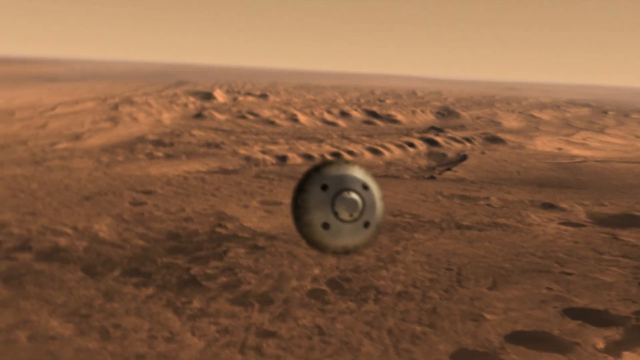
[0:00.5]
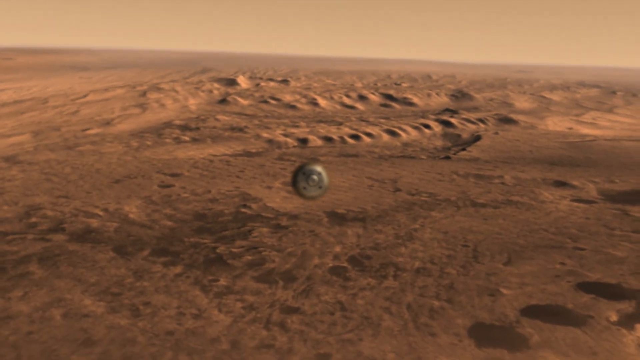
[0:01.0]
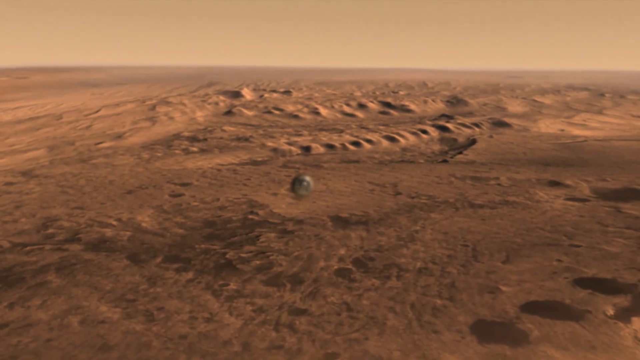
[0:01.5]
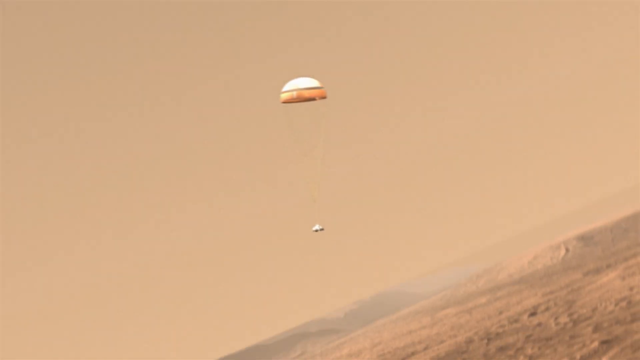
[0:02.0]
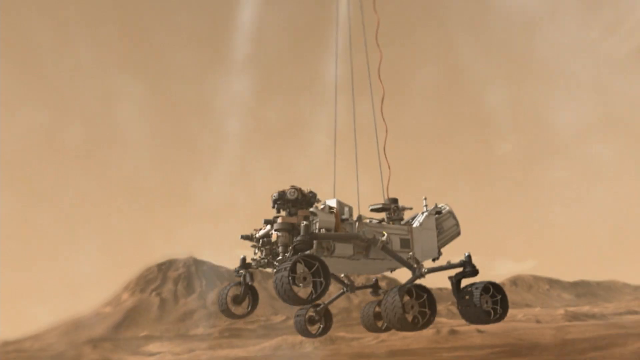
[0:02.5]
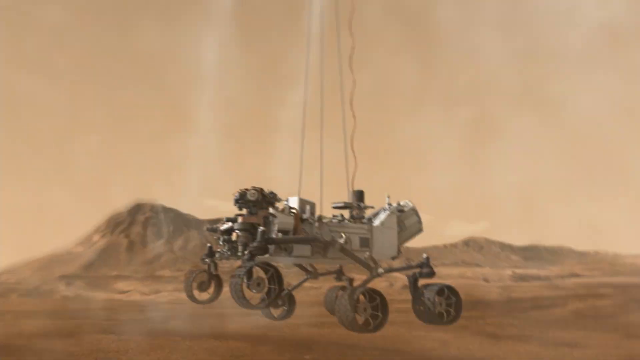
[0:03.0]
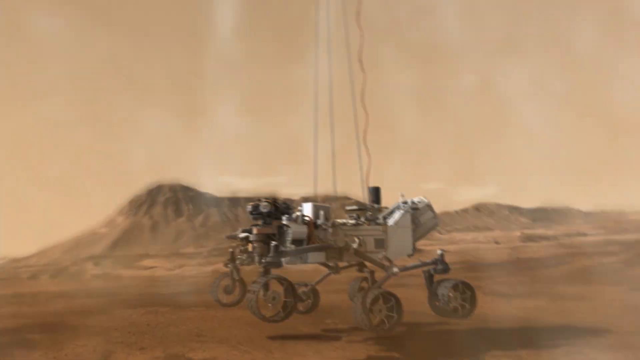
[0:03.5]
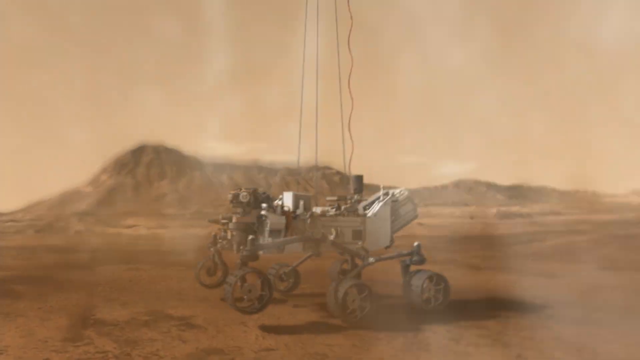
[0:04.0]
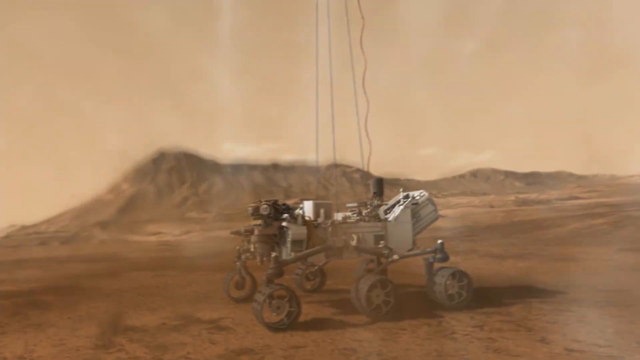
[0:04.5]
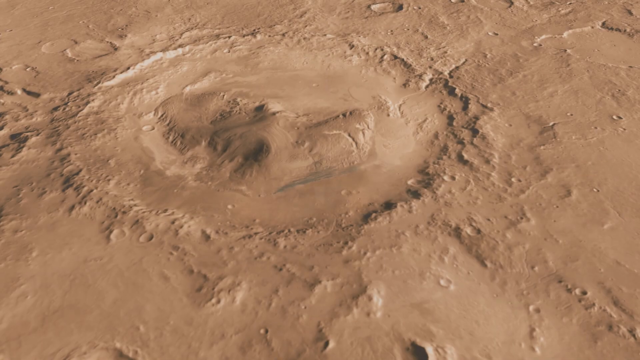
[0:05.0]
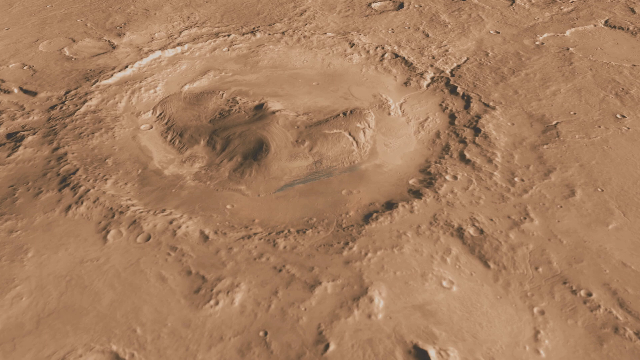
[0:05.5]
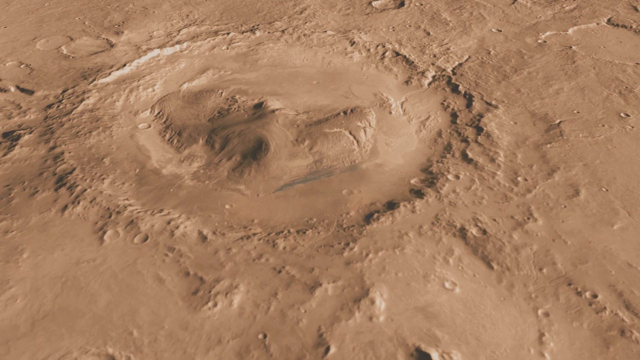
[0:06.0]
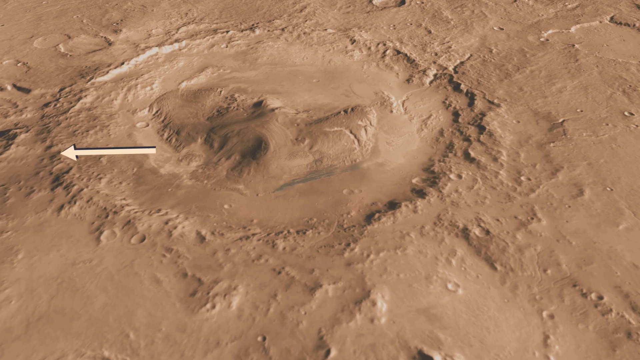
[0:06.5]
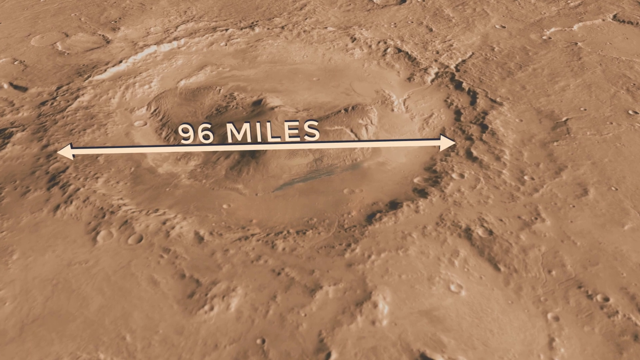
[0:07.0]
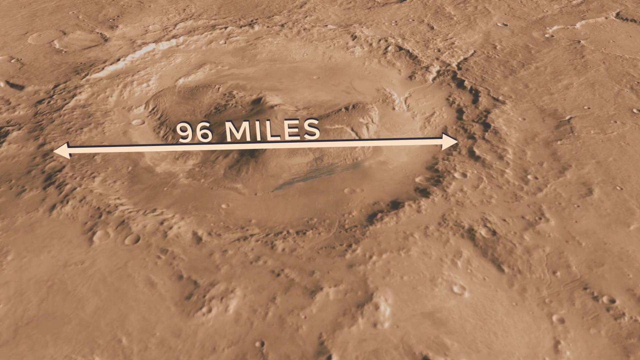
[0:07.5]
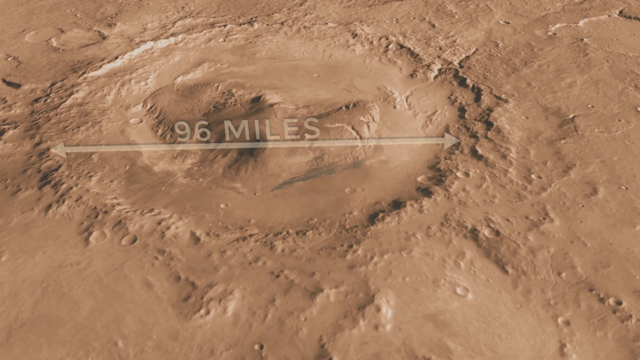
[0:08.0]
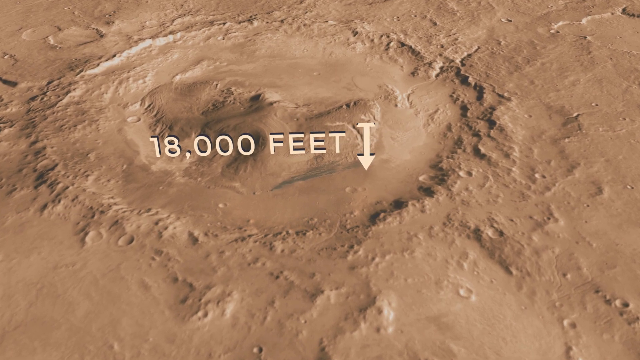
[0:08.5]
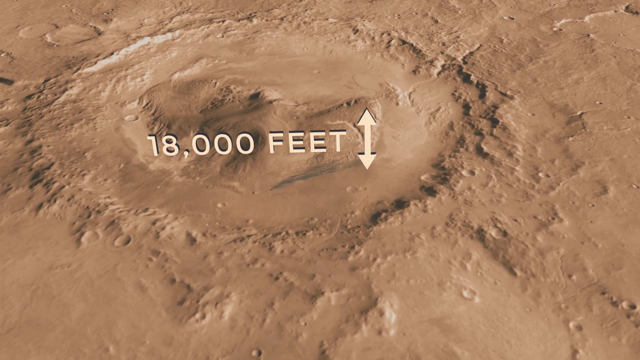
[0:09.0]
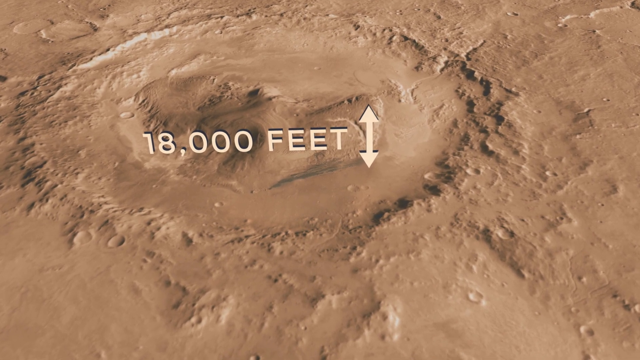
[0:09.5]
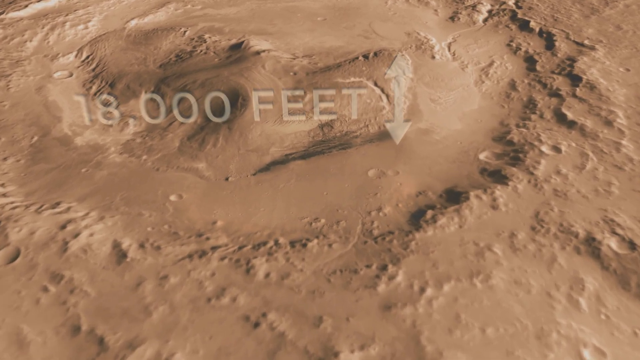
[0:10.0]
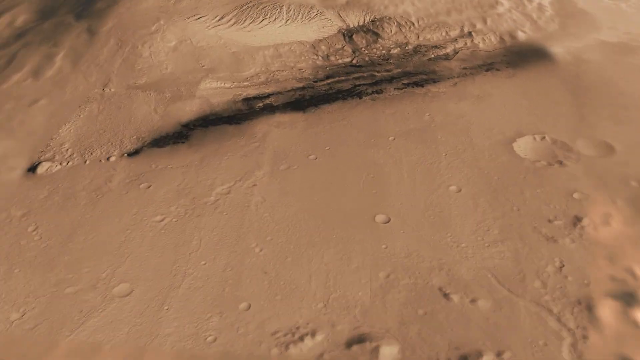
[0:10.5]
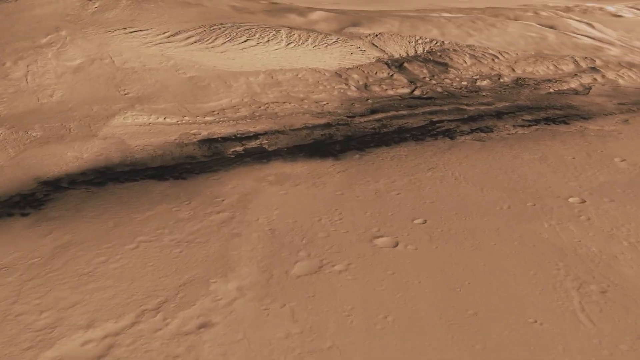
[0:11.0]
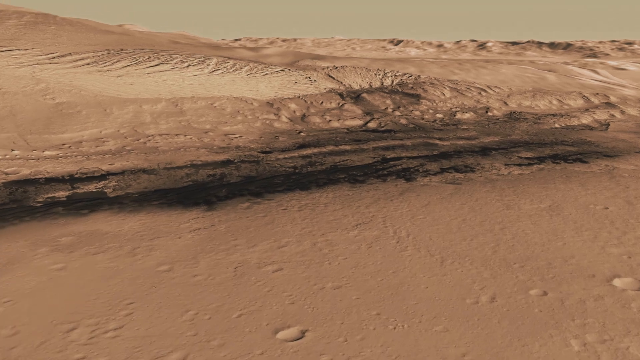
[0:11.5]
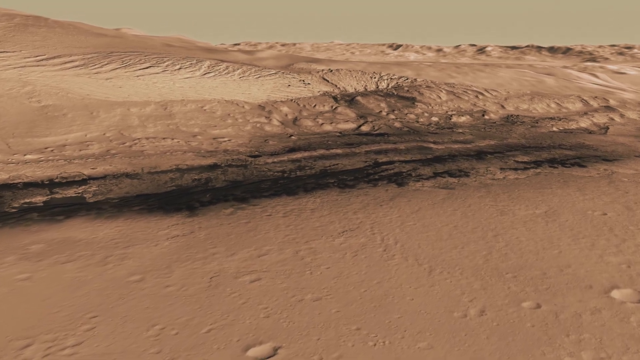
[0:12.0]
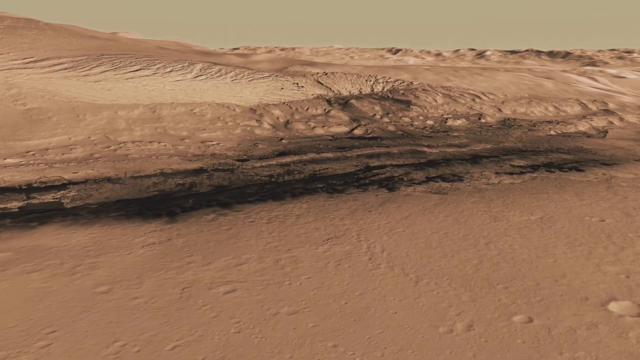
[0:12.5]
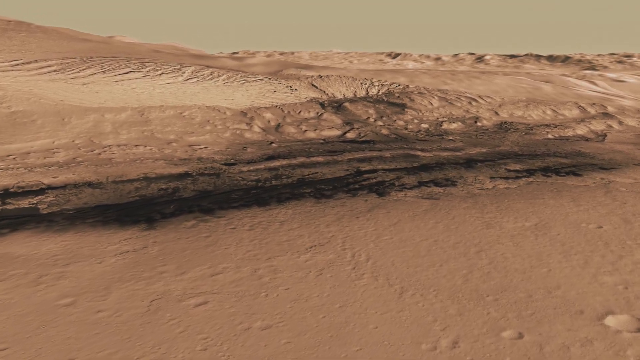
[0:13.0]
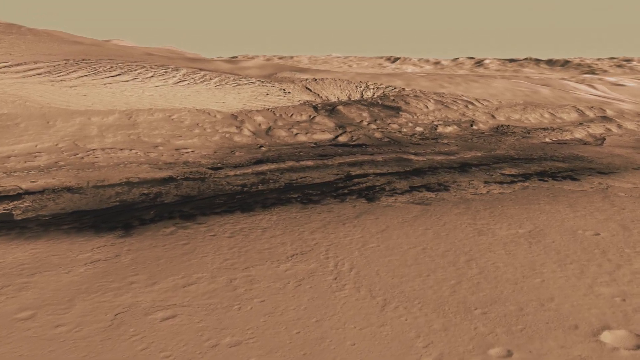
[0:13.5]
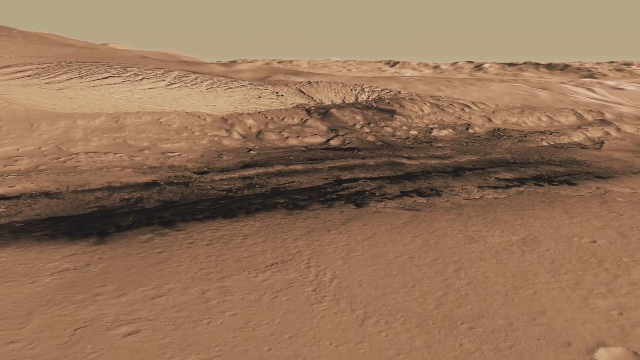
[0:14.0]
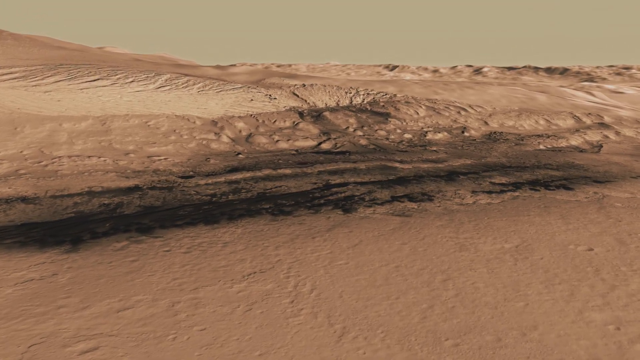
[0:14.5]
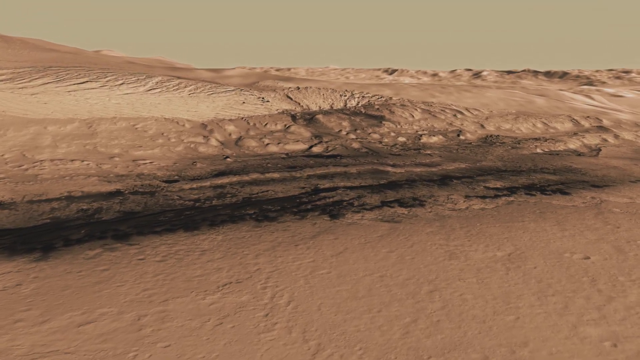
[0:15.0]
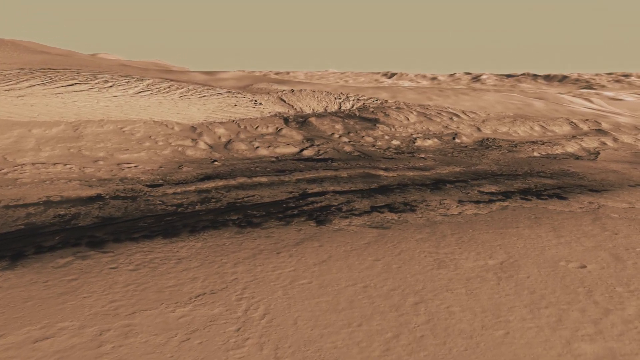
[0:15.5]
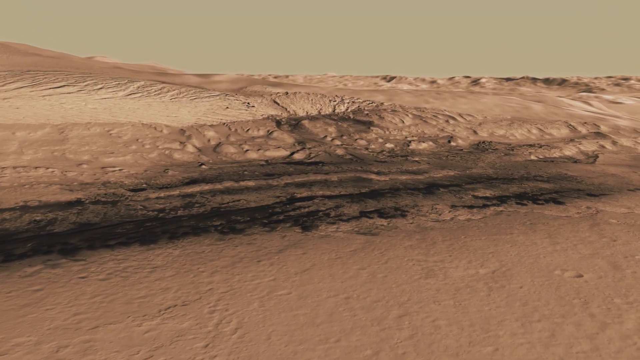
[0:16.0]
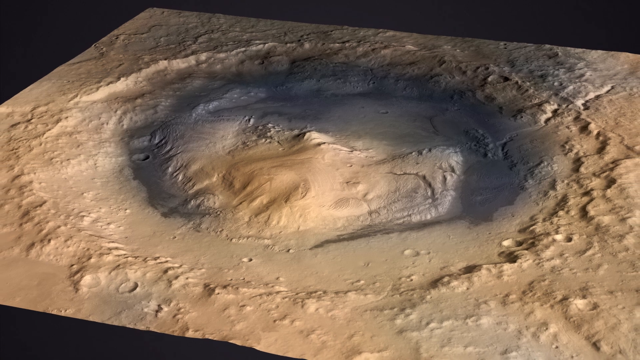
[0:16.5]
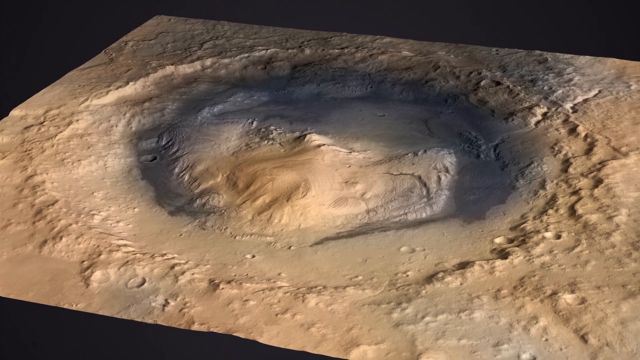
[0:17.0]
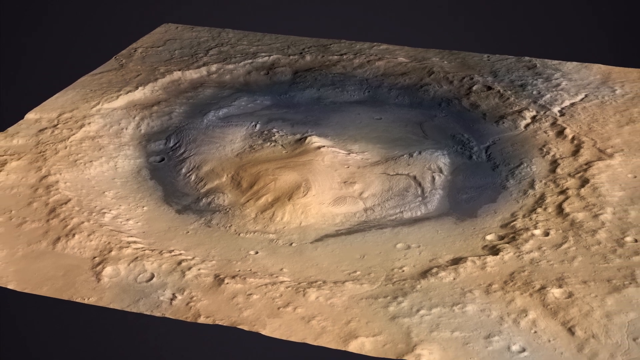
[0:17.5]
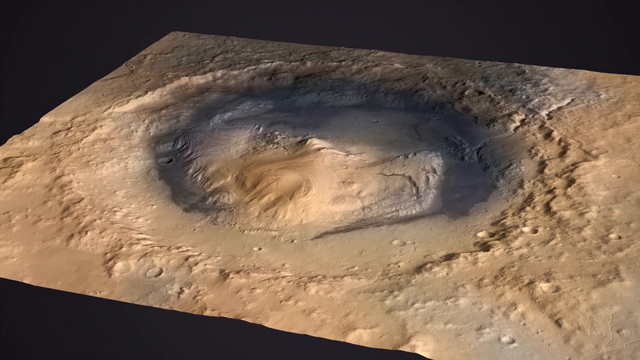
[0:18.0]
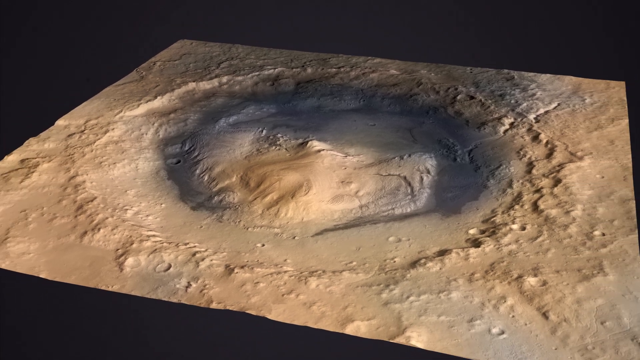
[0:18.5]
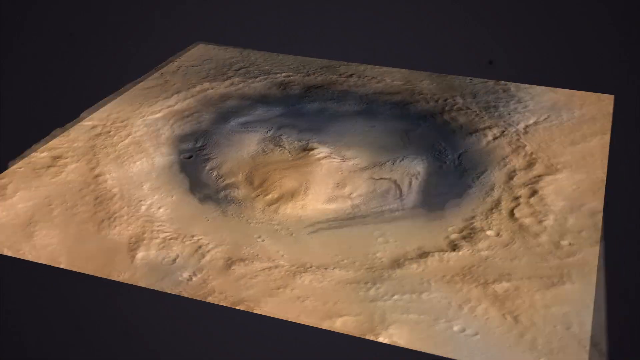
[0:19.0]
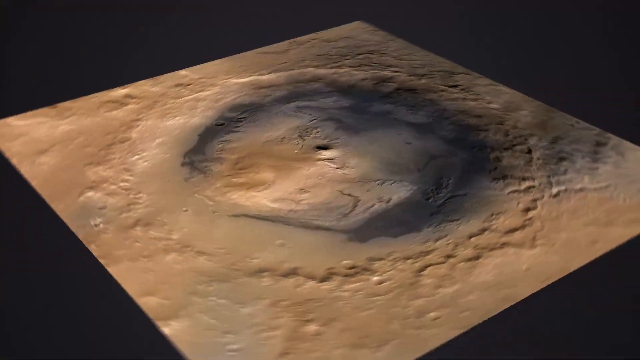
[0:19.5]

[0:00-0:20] A dramatic shot shows a probe entering what is possibly the atmosphere of Mars. The probe continues to descend through the atmosphere and releases a parachute that appears to be silver and gold. Dangling from the bottom of it on several cords is a Mars Rover-style machine with wheels. The terrain is kind of brown and sandy and very rocky in appearance. A crater that is 96 miles wide and 18,000 feet deep comes into view. The view zooms in to a close-up of the crater, which appears rocky, barren and mountainous, with many jagged edges and some dark spots; it is lifeless, with nothing but sand and rocks. An aerial view presented as a 3D, map-style image sort of zooms out, and then the map rotates very quickly.